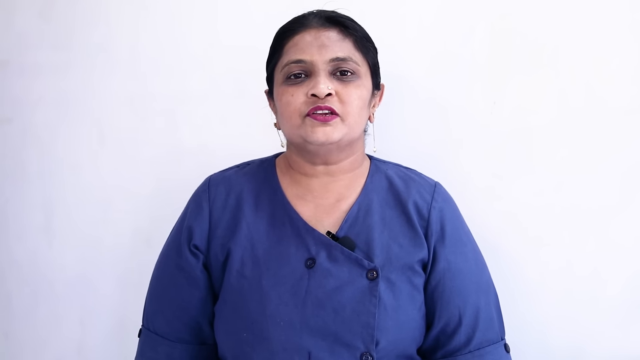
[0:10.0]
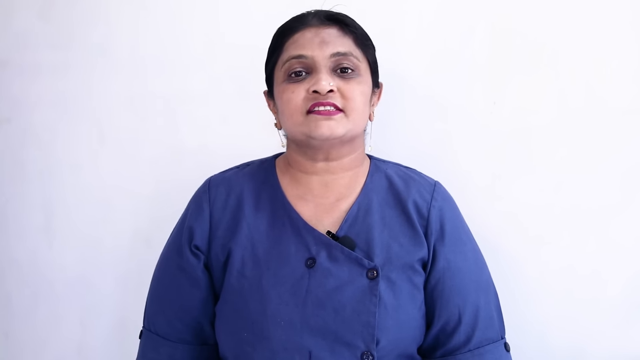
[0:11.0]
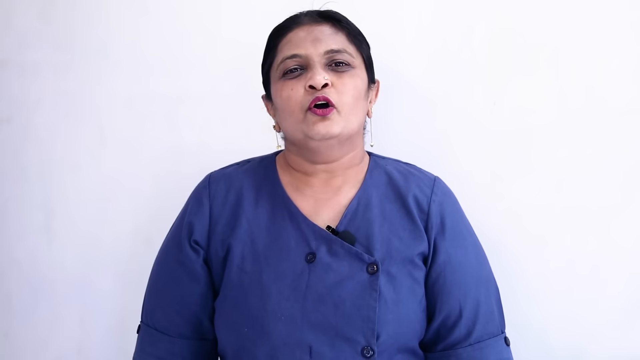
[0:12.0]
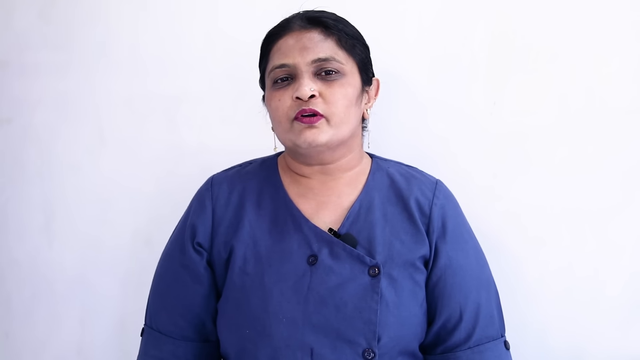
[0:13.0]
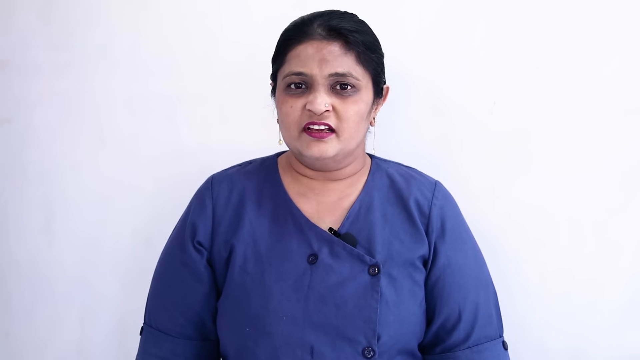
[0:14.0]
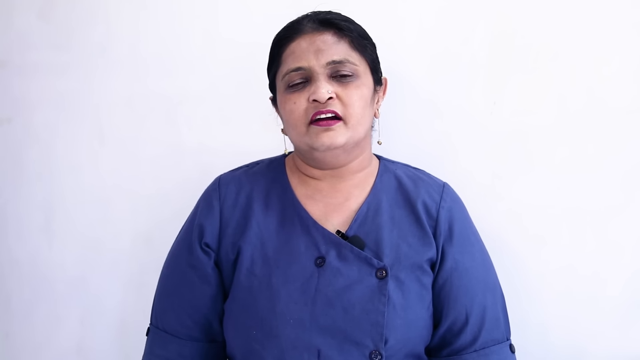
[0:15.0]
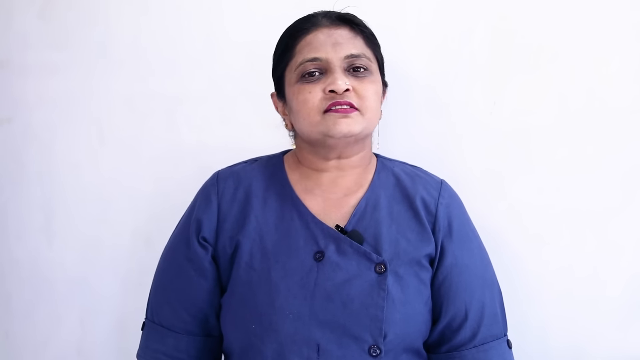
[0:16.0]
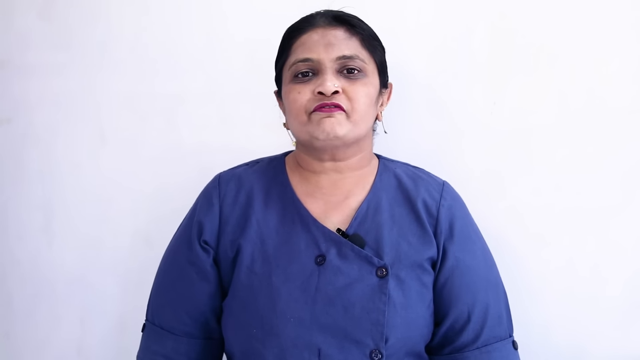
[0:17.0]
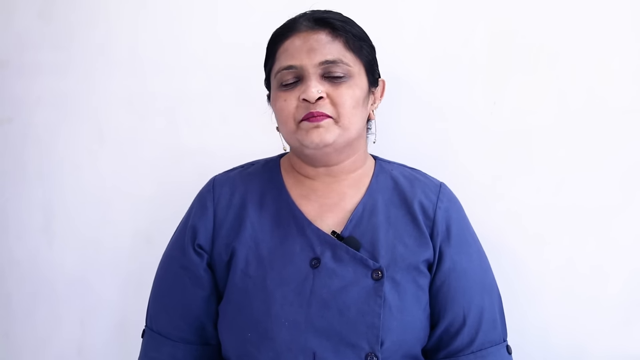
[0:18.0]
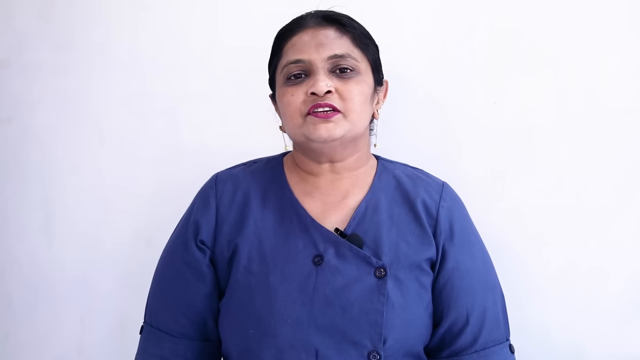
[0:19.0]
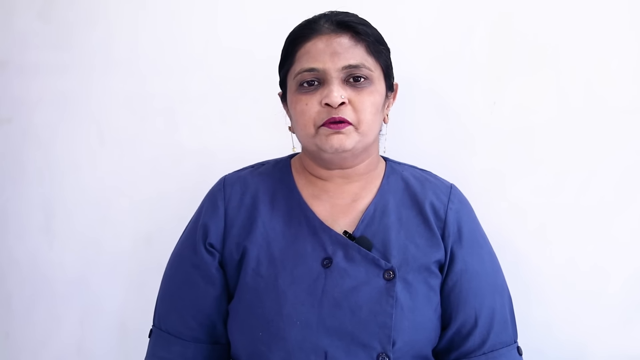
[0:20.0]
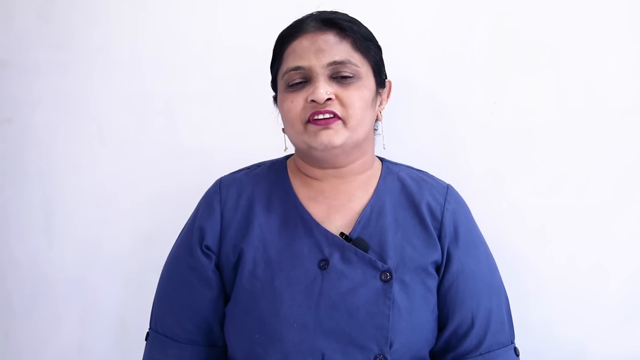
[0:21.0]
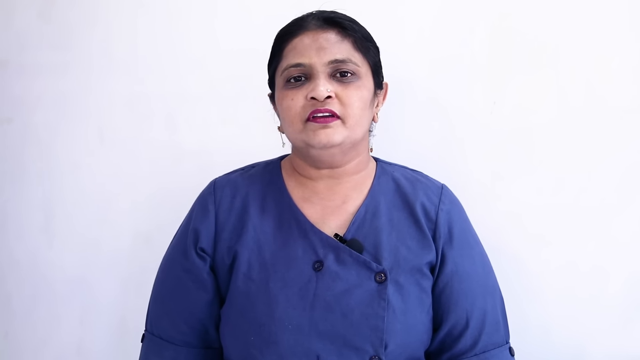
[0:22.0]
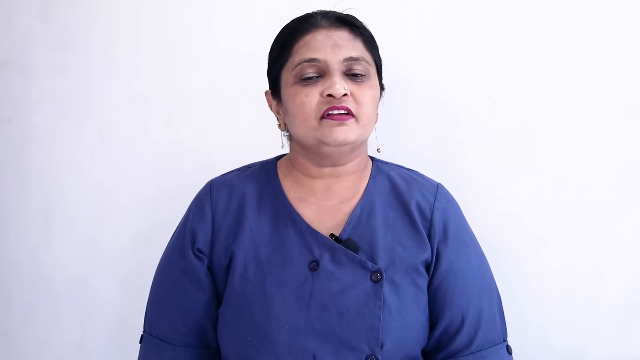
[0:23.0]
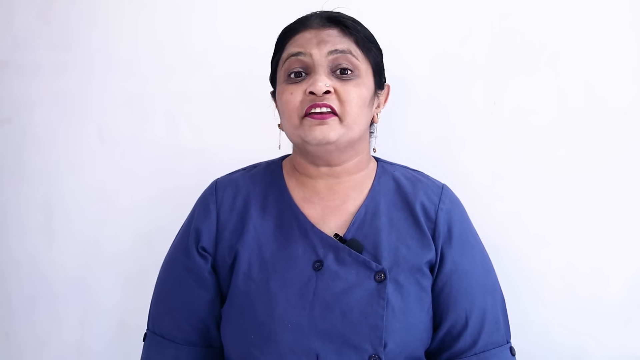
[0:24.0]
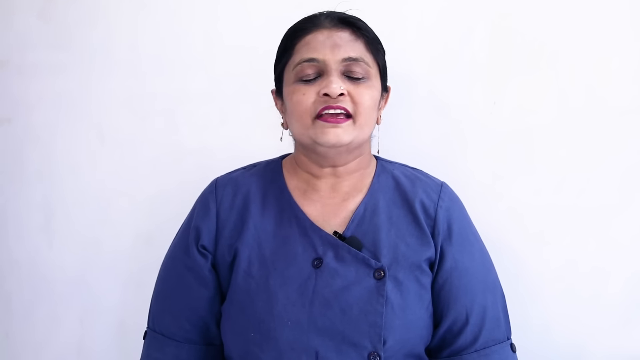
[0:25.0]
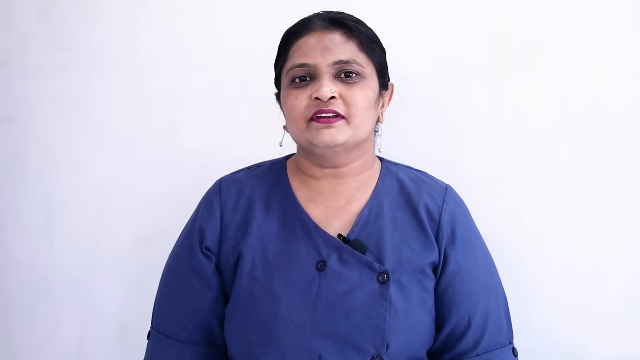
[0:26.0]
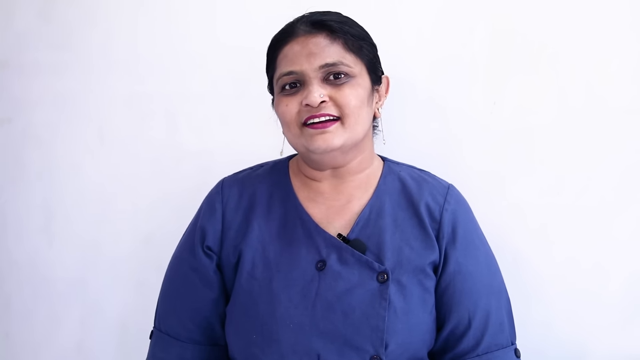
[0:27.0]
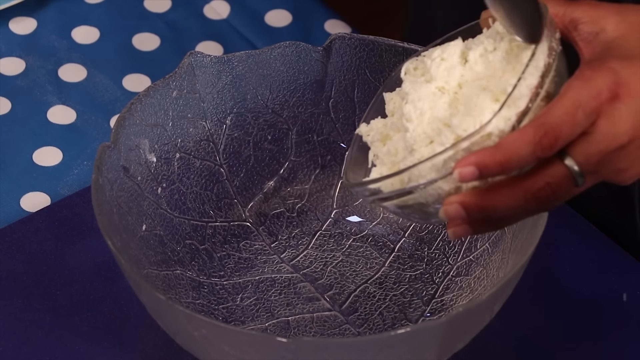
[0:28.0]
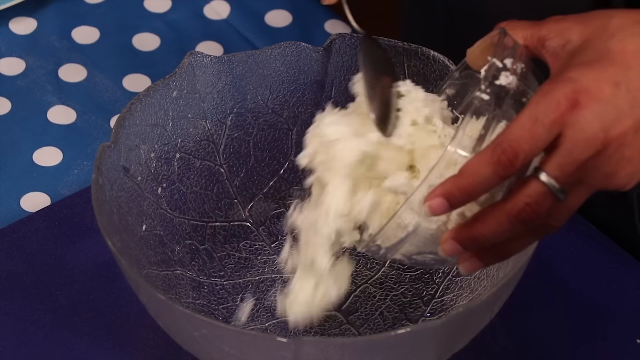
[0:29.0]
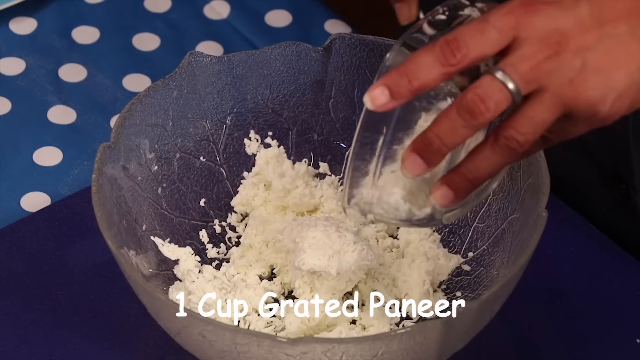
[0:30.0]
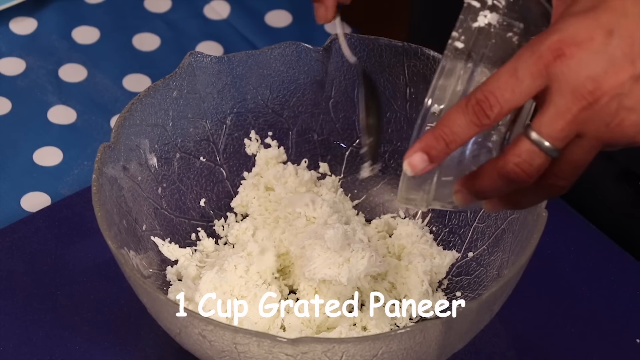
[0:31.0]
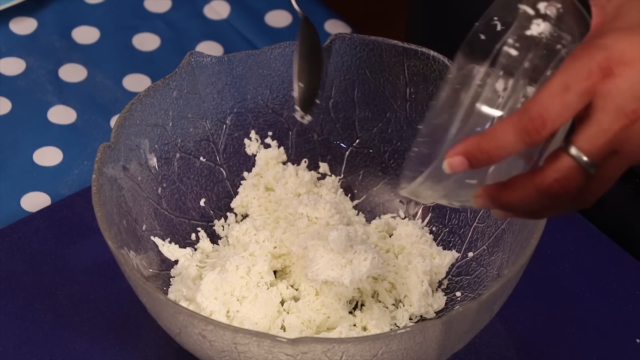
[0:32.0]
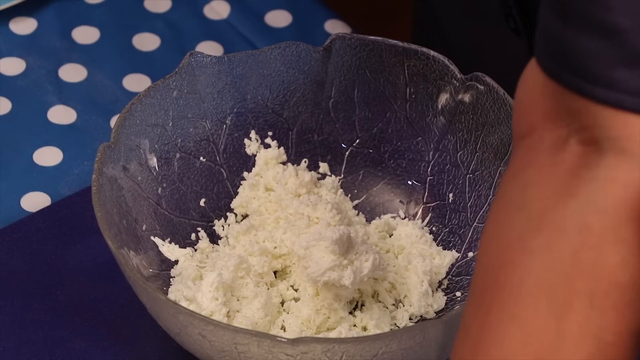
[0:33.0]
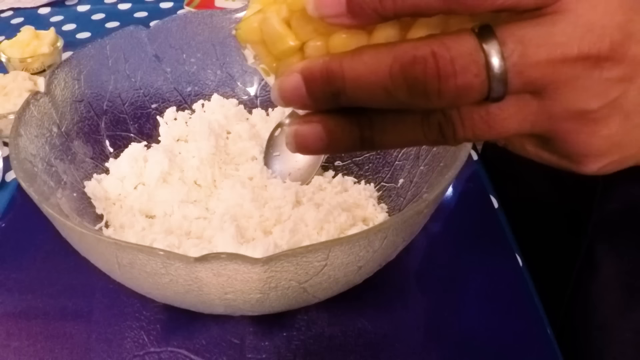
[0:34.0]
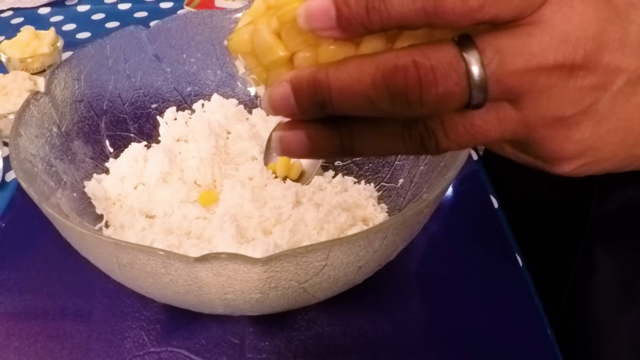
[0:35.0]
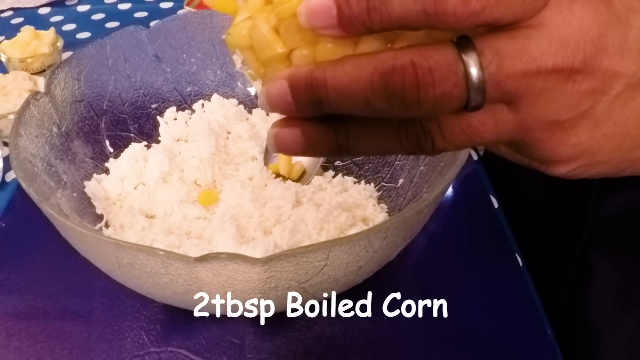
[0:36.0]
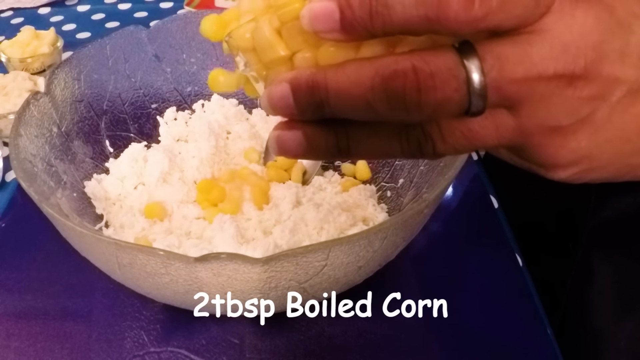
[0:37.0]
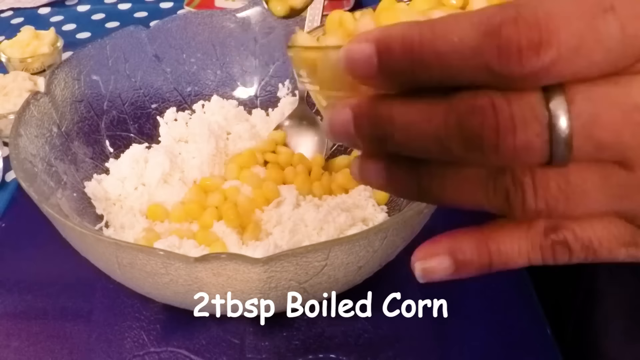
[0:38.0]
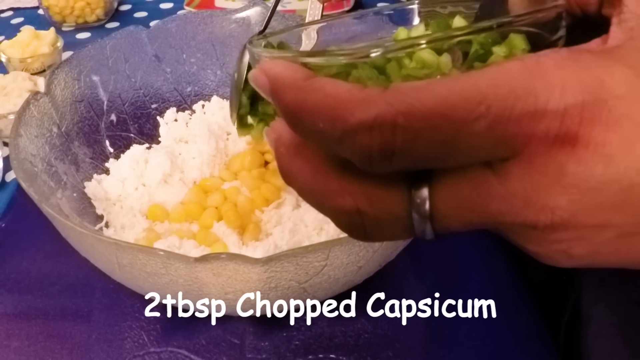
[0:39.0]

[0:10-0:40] The woman nods her head forward a little as she speaks and tilts her head to the right, almost as if shaking it no. She is a lighter-skinned Indian woman with darker hair, probably in a bun at the back, combed very tightly. She wears medium pink lipstick and has brown eyes, with a somewhat darker gray, eye-shadow-like coloring above and all around her eyes. She uses no gestures other than her head tilting, and her hands don't seem to be up at all. Next she holds a bowl in her left hand, with a simple silver band on her left ring finger. The bowl looks like a leaf, with a vertical line running down it and branches to the left and right. She scoops in some paneer, and text to the side reads "one cup of grated paneer"; it looks like chopped-up rice at the bottom of the bowl. She spins the bowl for a moment. Then she adds corn from a bowl, with text reading "two tablespoons of boiled corn". In the distance, two different bowls of ingredients sit on a blue background with white polka dots. She then adds two tablespoons of a chopped ingredient that looks like green, almost chopped-up celery, scooping it on top of the corn and the rice-looking material.